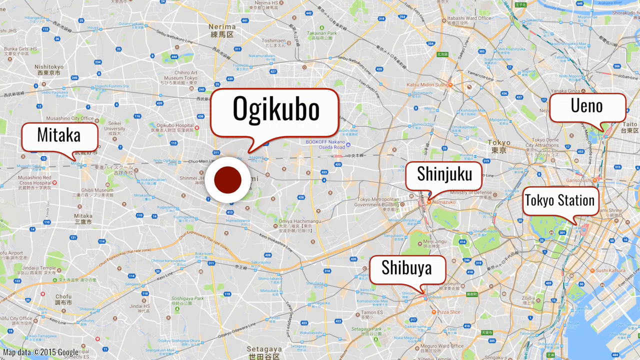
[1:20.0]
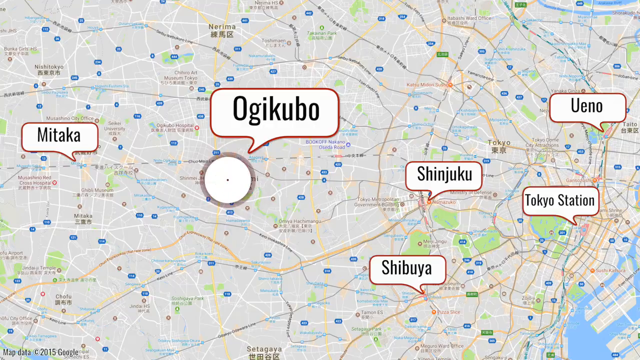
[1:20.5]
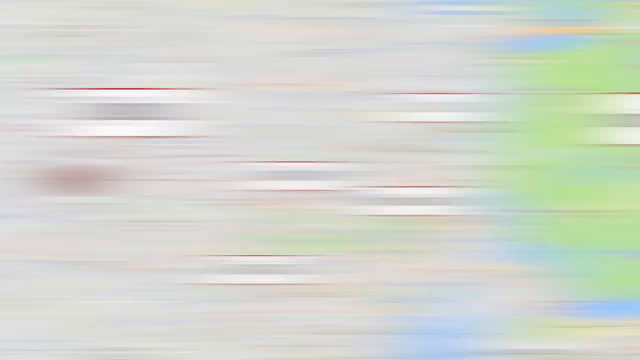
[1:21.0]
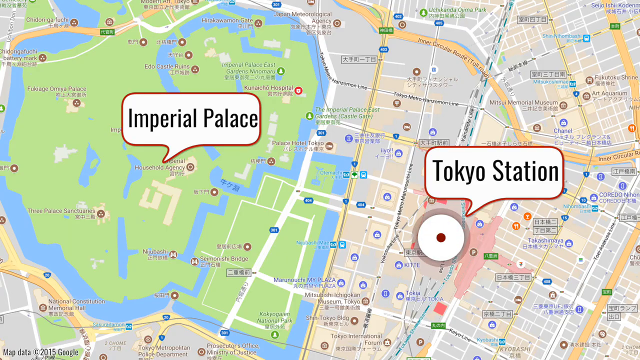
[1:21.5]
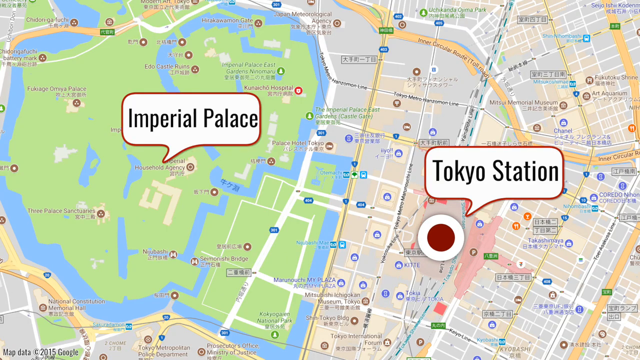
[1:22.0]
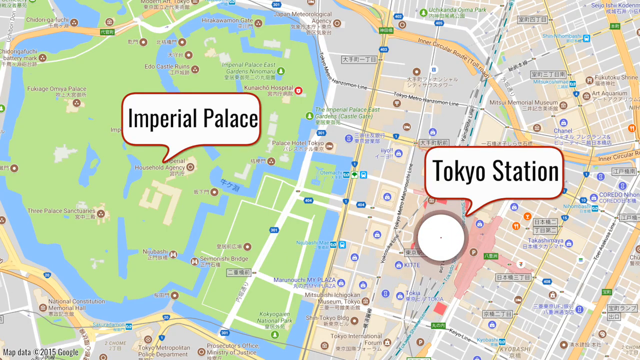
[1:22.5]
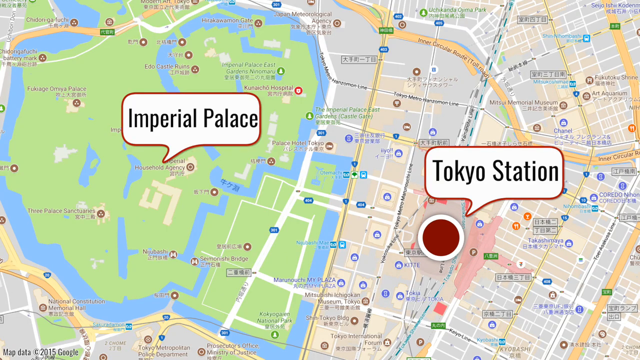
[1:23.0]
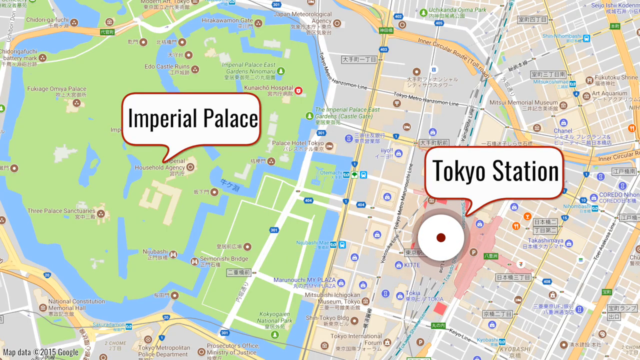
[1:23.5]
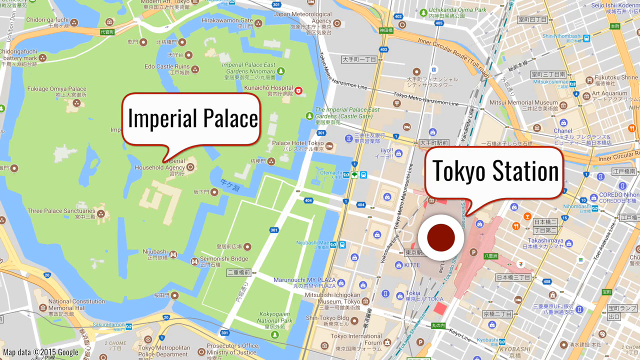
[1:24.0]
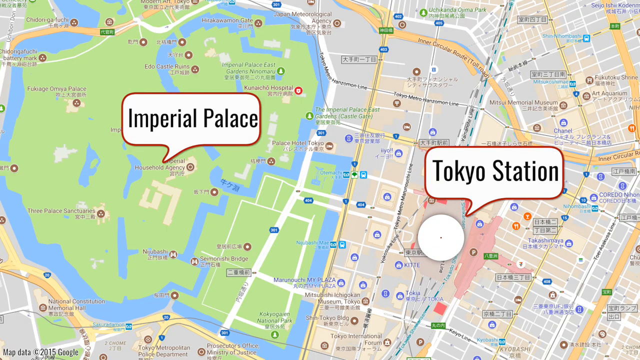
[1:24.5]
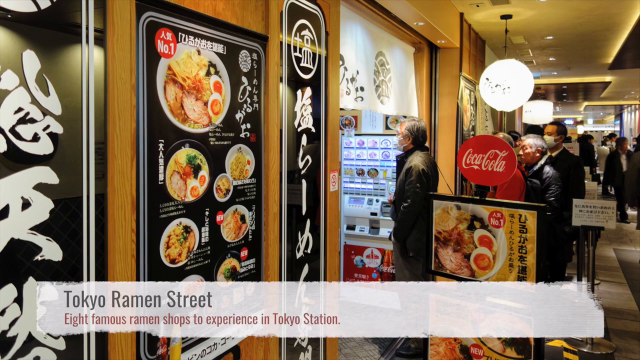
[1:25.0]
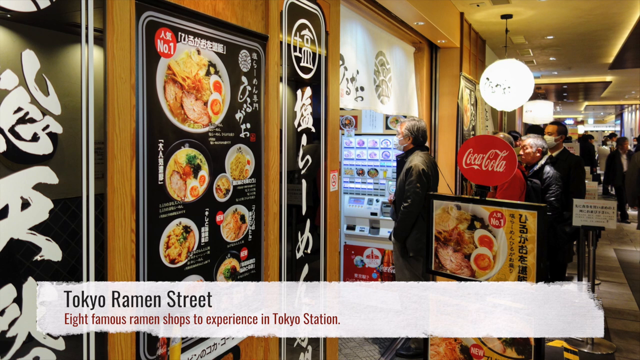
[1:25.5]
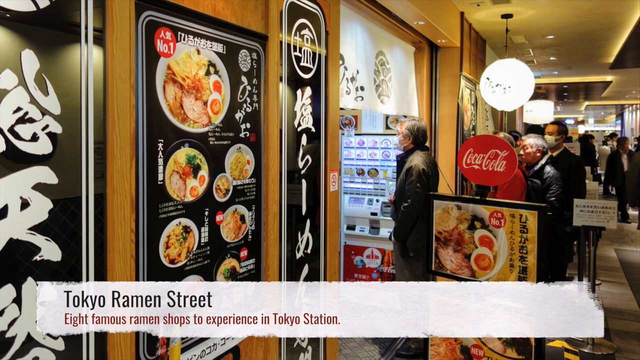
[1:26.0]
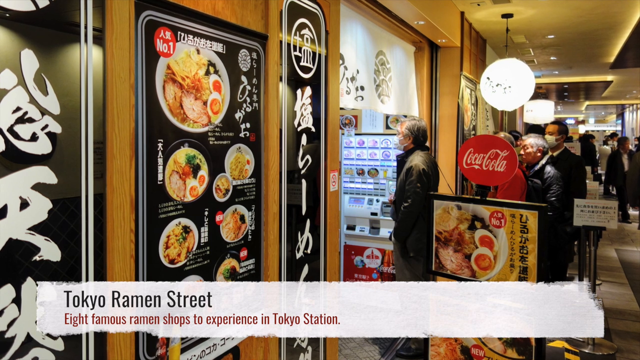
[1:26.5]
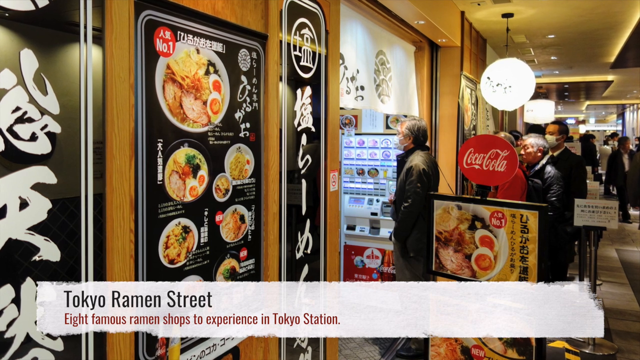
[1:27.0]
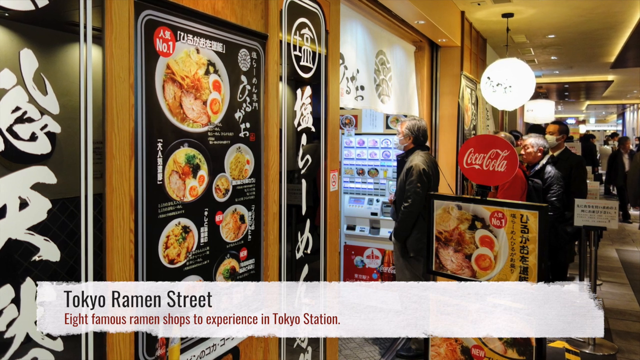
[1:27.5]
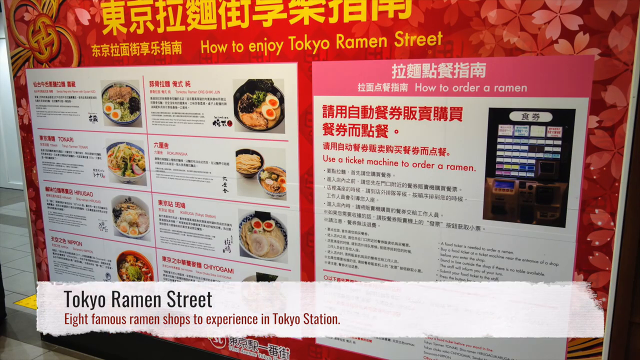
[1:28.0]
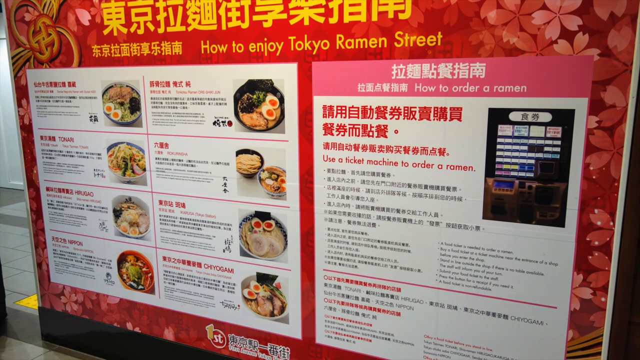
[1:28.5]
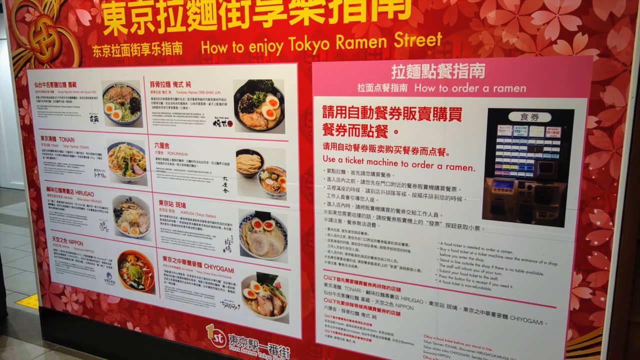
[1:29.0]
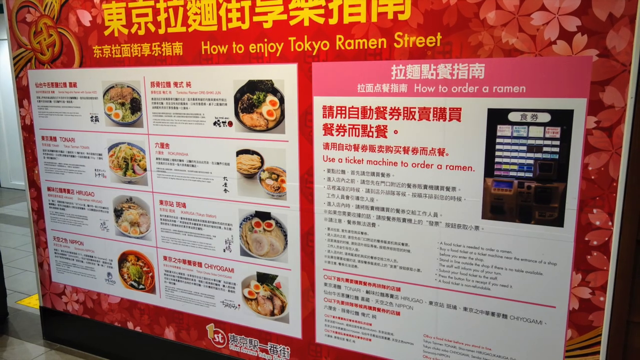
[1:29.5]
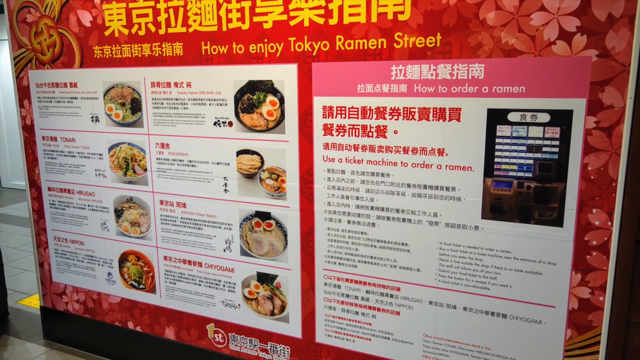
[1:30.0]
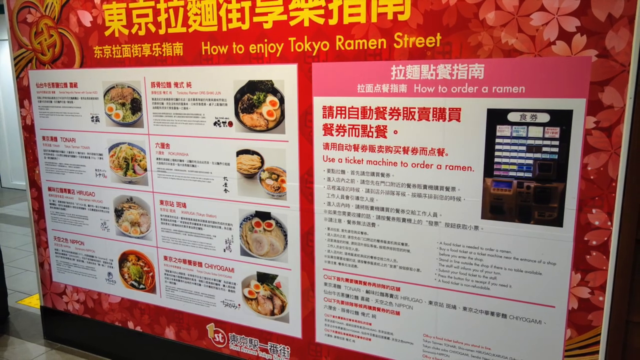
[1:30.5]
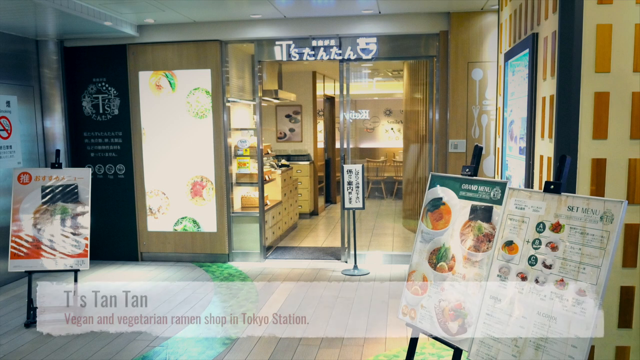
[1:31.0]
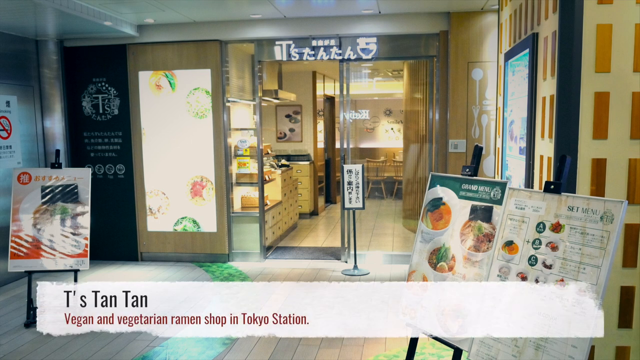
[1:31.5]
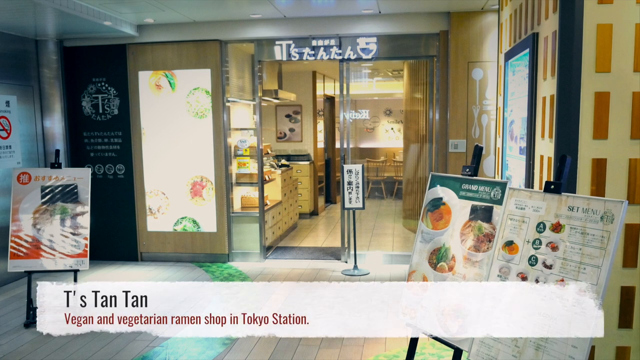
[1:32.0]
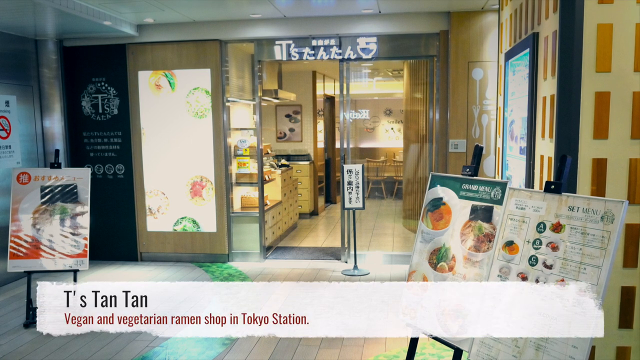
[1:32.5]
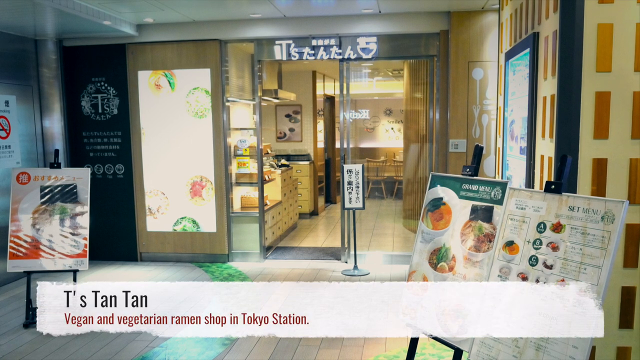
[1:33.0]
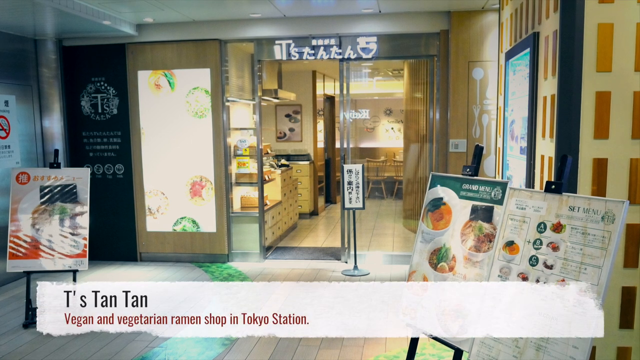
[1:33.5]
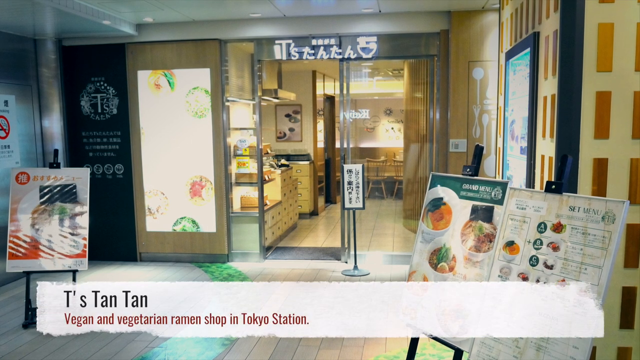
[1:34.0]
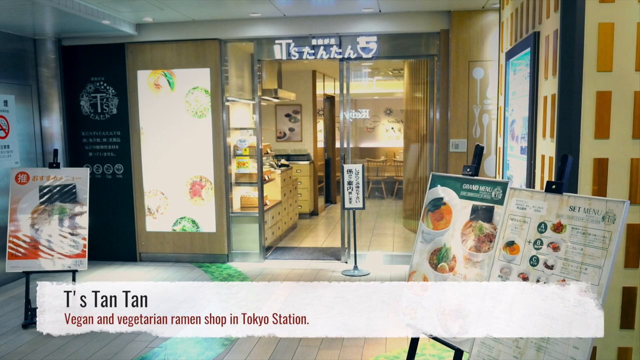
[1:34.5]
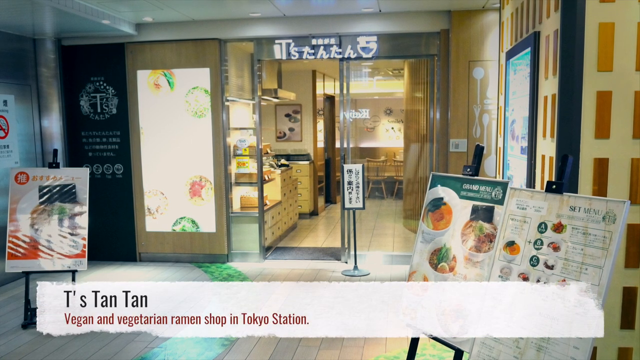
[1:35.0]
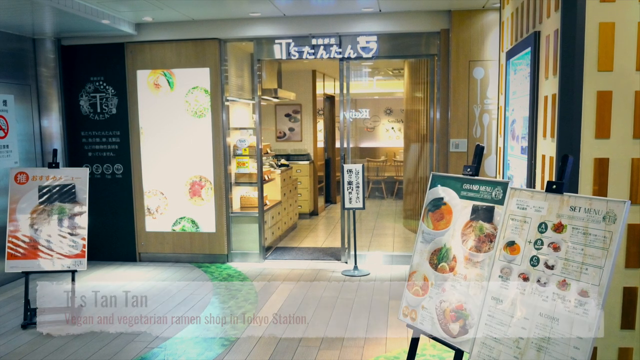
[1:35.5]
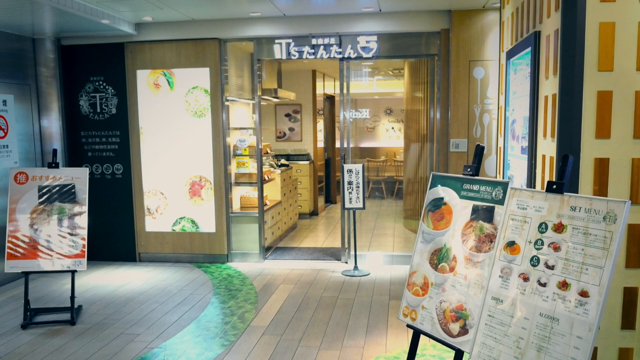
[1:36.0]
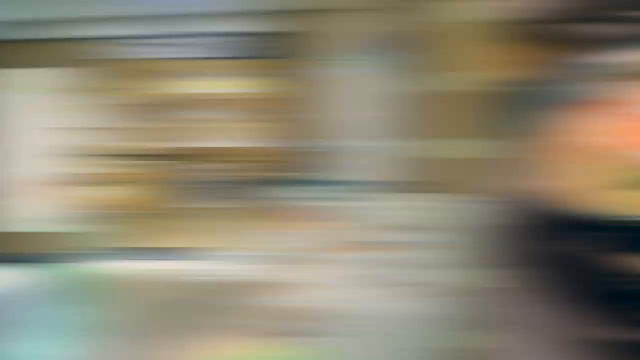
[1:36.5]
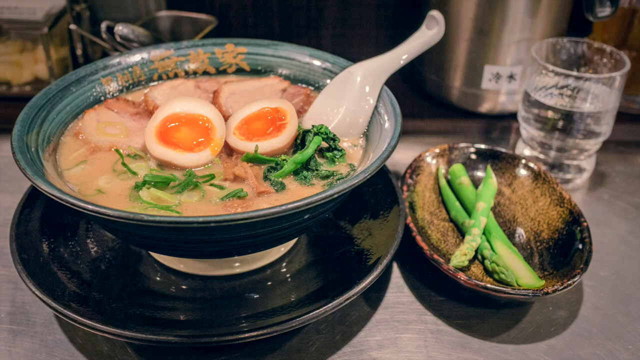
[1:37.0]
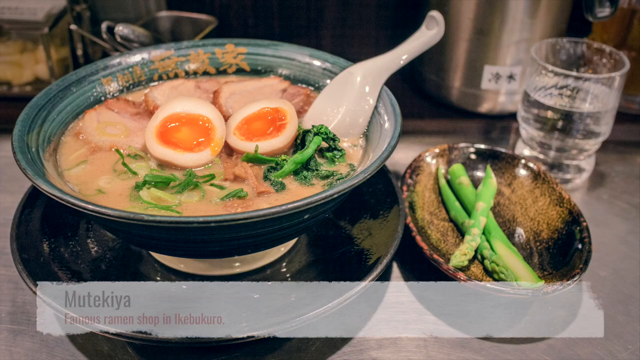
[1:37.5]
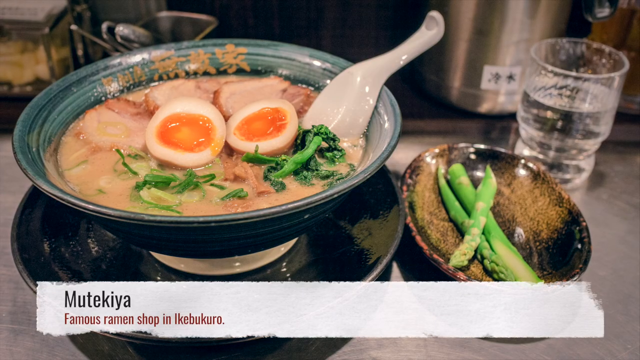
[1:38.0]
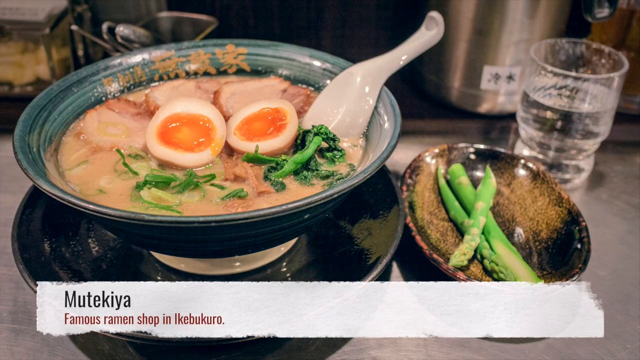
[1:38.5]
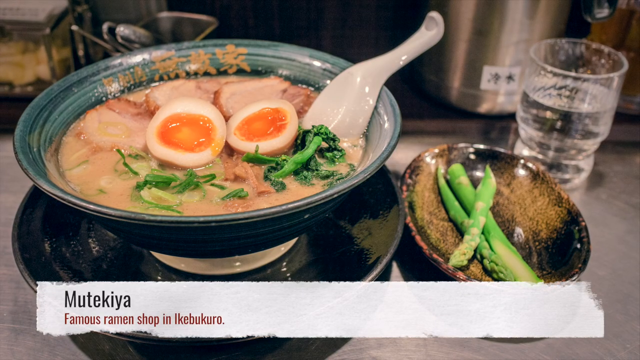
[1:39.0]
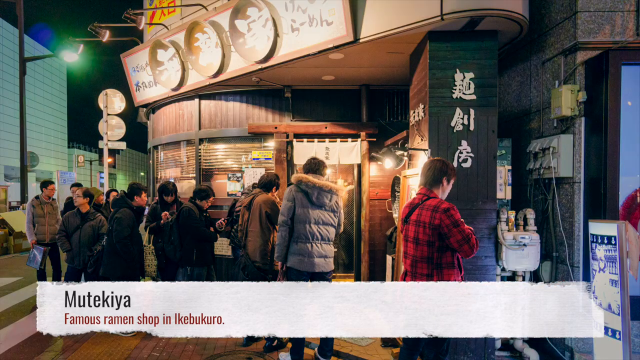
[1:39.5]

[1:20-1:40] A big map shows the Imperial Palace and Tokyo Station, including Japanese streets. The video switches to a ramen shop on Tokyo ramen street, with a white banner describing the restaurant. Text on the bottom says "8 famous ramen shops to experience in Tokyo Station," and at the top people are lining up outside the shop to get ramen. There is a Coca-Cola sign. Then a menu shows how to enjoy Tokyo ramen street. Another image shows T's Tan Tan, a vegan and vegetarian ramen shop in Tokyo Station, with a menu on the right of the image, followed by product images all over the screen describing the shop. Finally, there is another famous ramen shop, Mutekiya Ramen, with people lining up outside.